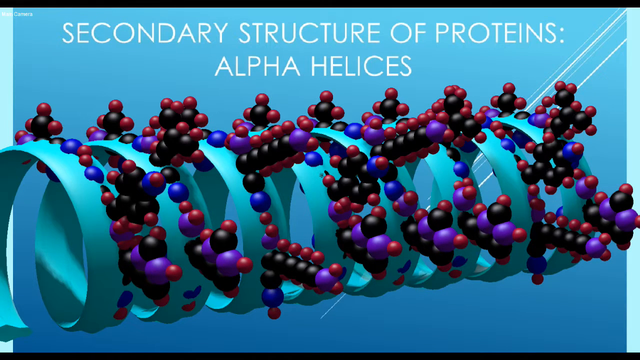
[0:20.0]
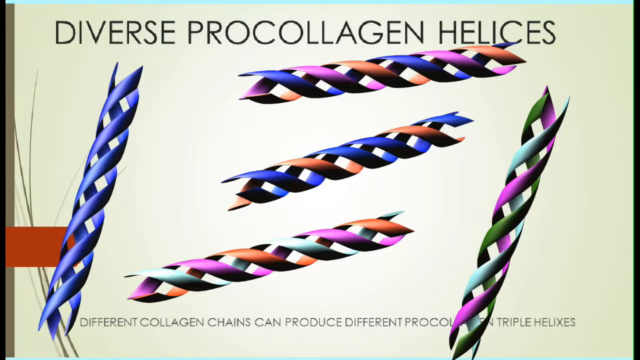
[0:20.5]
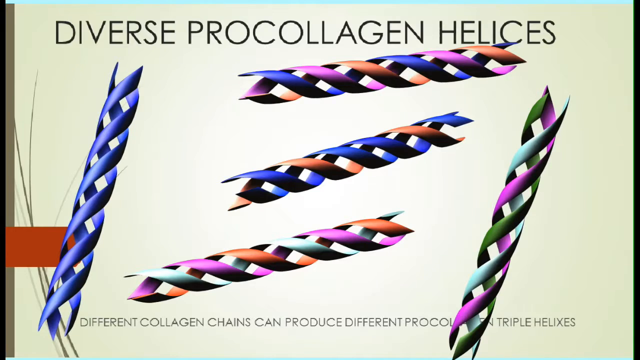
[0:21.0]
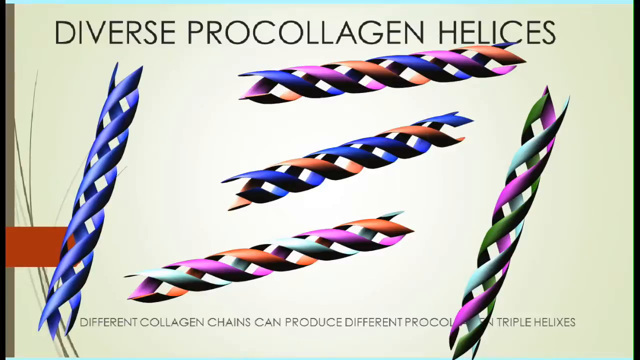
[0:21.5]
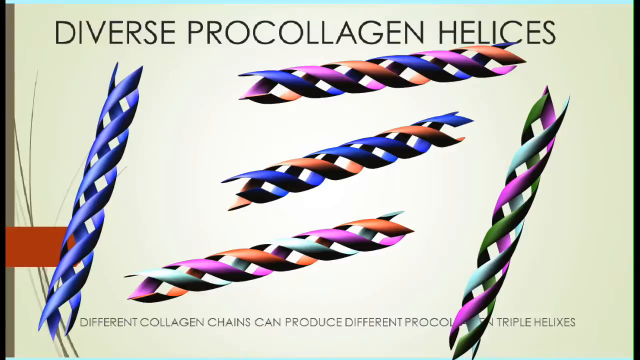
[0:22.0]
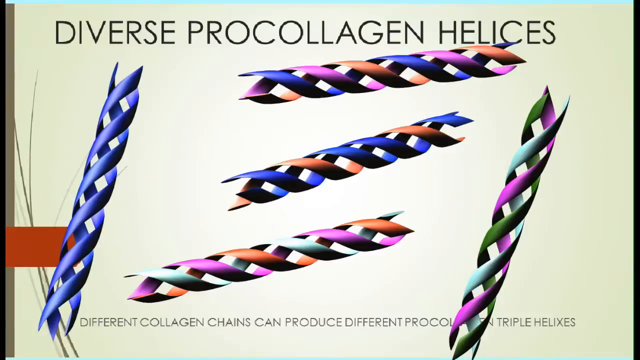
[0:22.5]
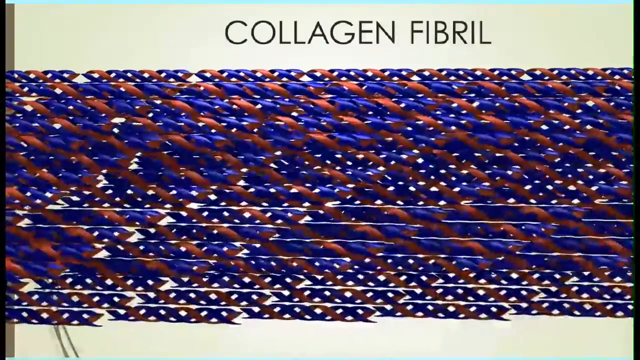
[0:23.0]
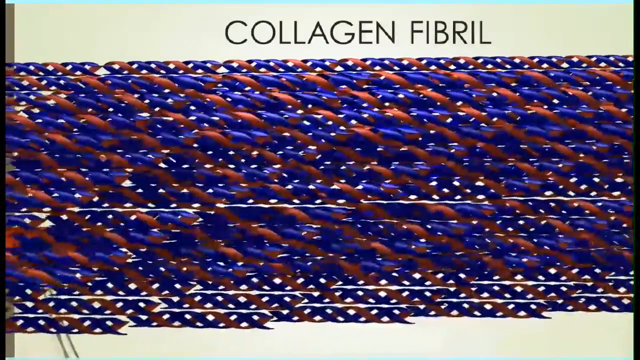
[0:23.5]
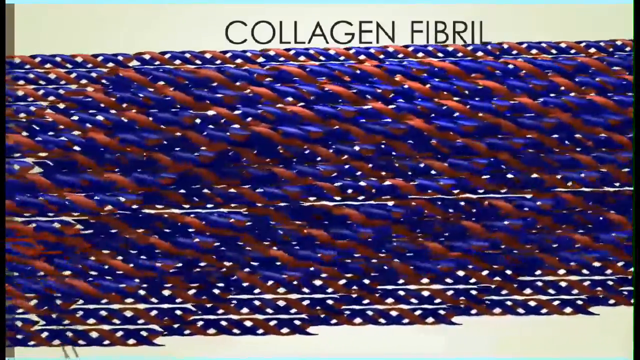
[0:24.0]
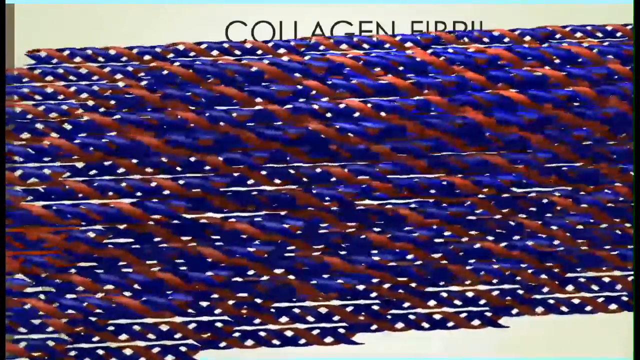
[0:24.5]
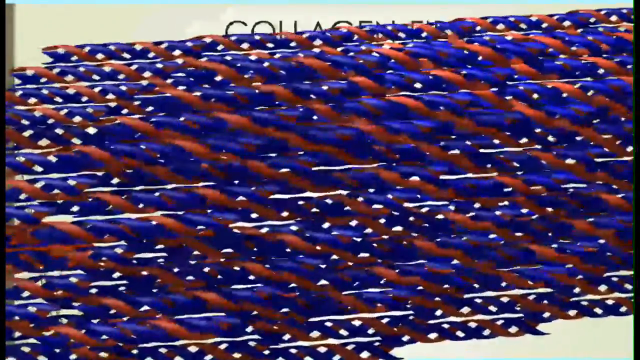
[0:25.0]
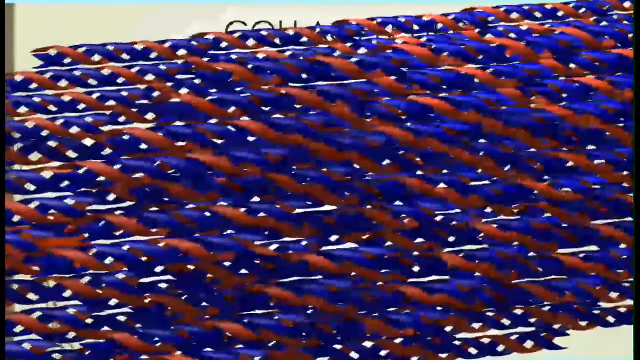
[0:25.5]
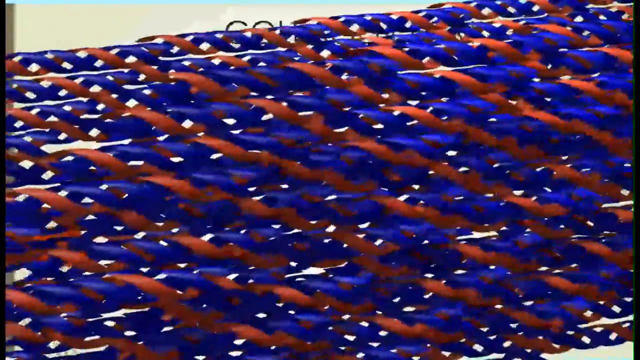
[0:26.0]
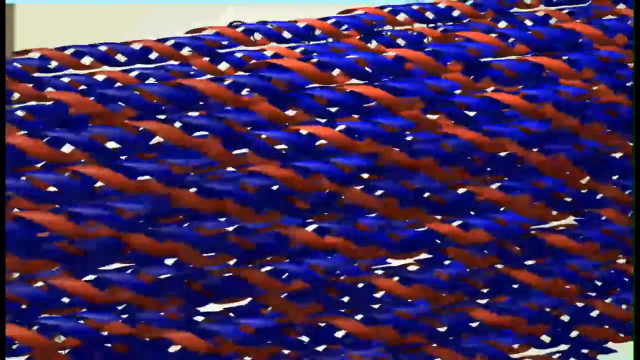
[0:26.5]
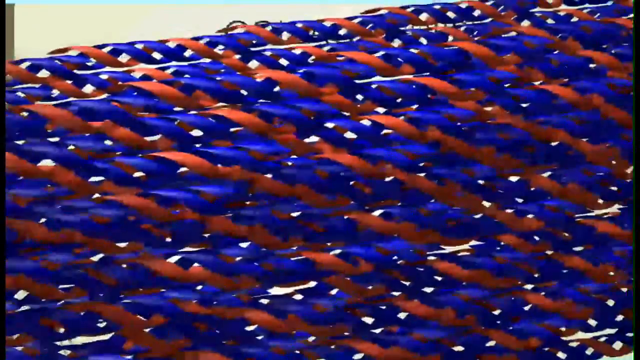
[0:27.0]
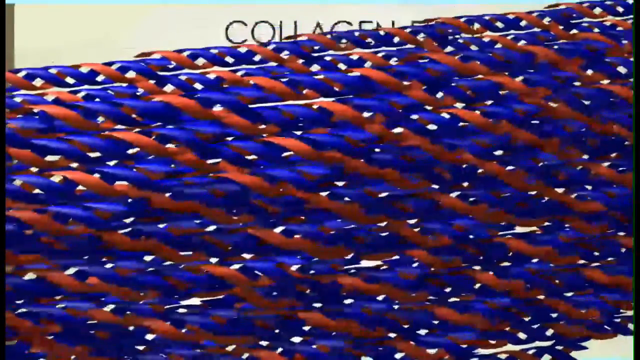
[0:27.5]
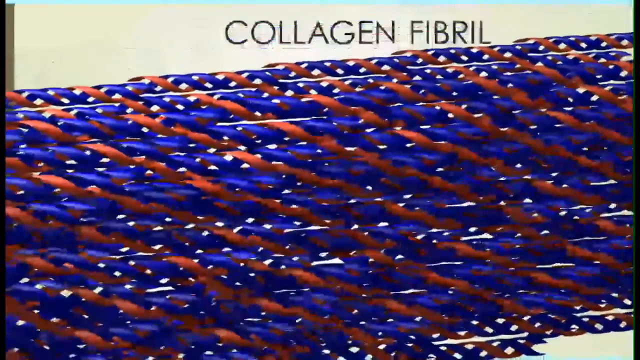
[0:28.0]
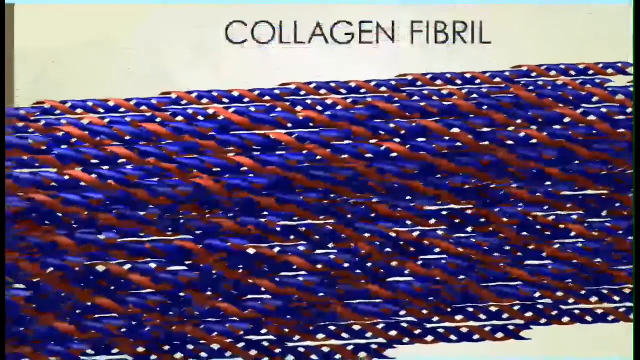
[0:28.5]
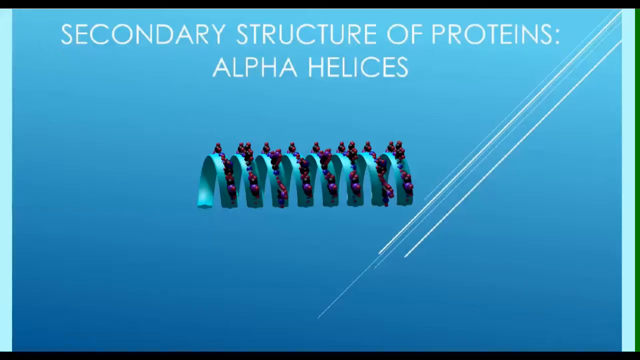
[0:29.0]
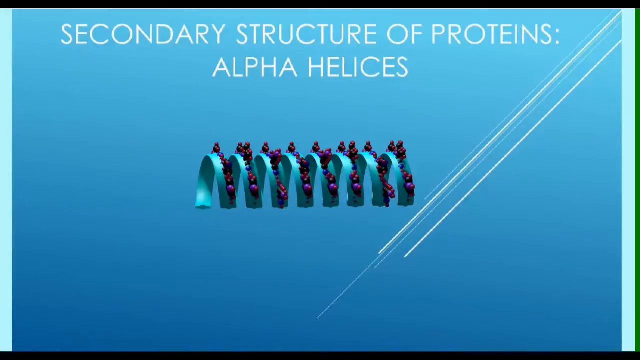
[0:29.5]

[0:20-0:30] The scene changes to diverse procollagen helices. A blue one is visible, along with several others: a blue, purple and red one spinning together, a green, purple and red one spinning together, and a green, very light blue and purple one. Next, a large amount of collagen fibrils appears all together in one big chunk. The video then returns to the secondary structure of protein alpha helices.